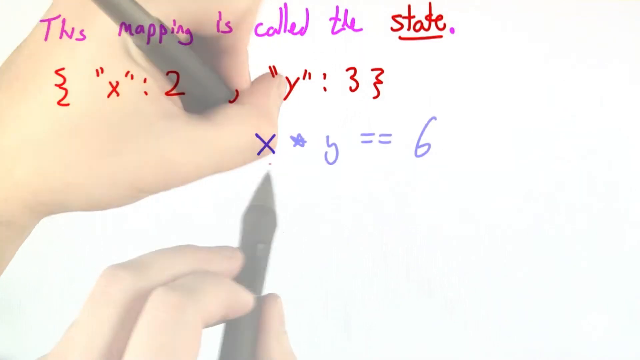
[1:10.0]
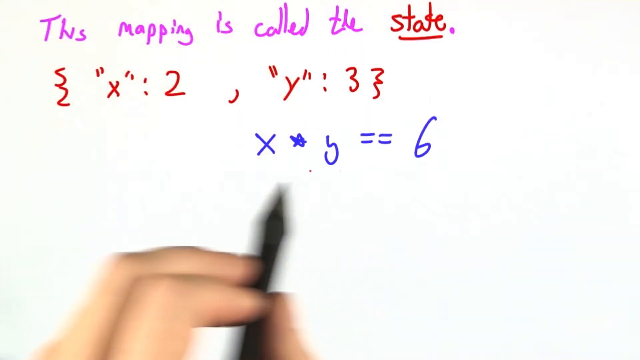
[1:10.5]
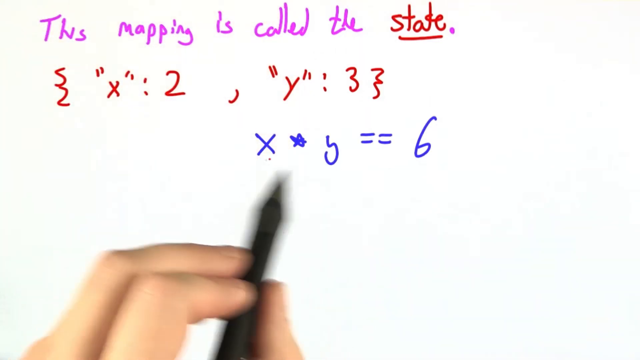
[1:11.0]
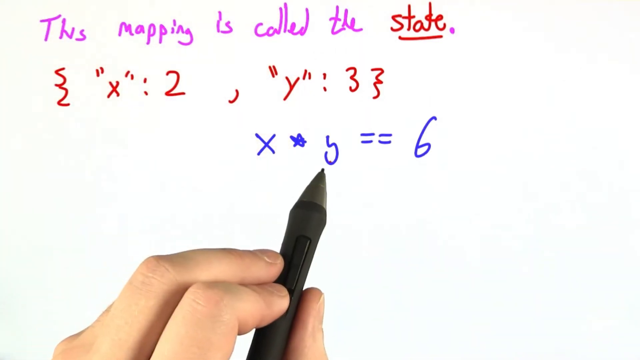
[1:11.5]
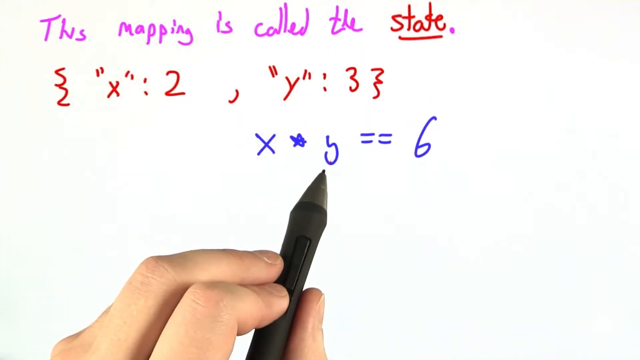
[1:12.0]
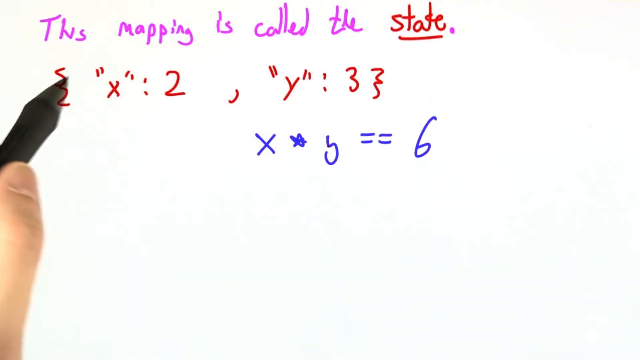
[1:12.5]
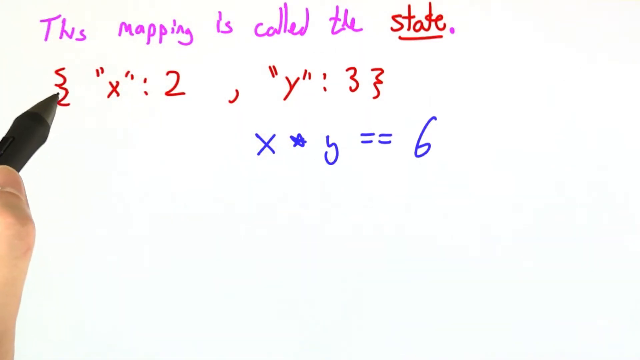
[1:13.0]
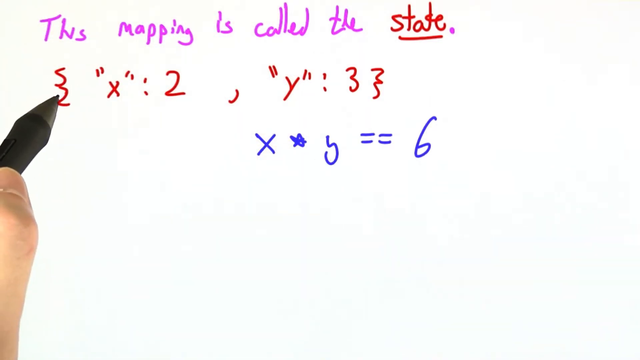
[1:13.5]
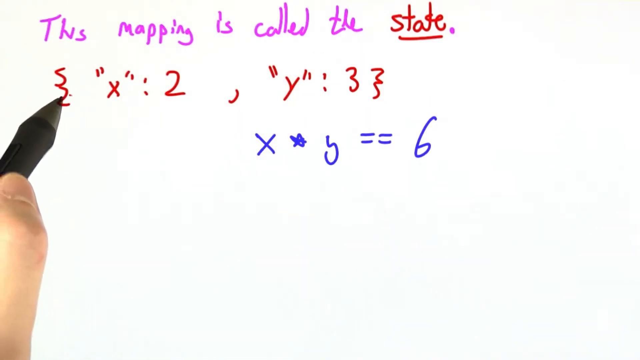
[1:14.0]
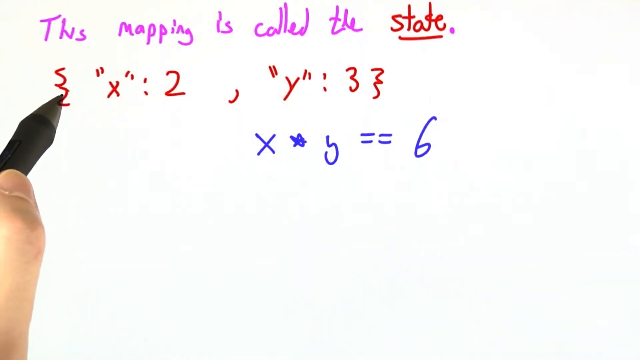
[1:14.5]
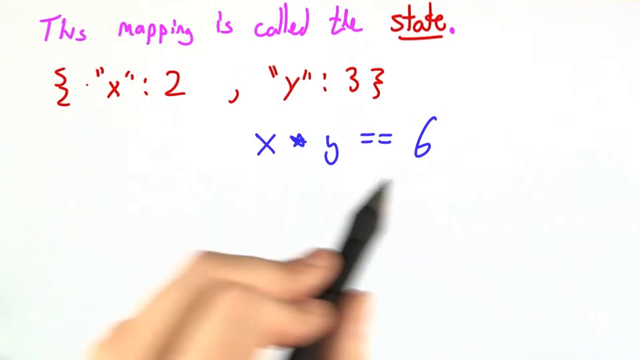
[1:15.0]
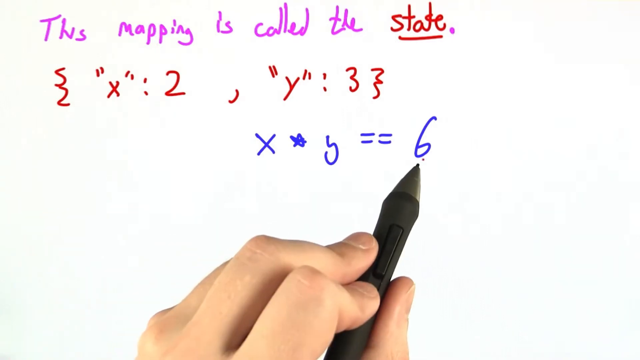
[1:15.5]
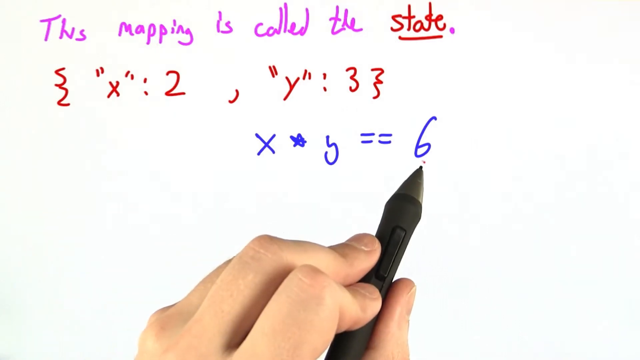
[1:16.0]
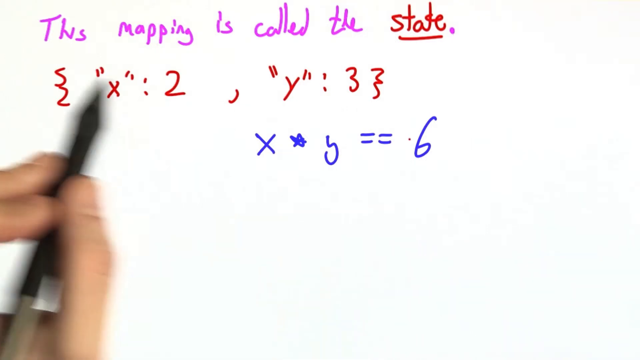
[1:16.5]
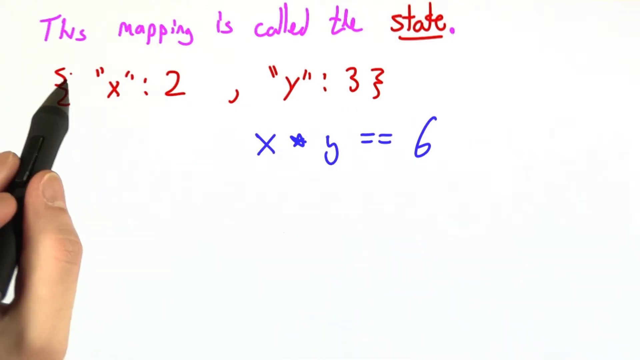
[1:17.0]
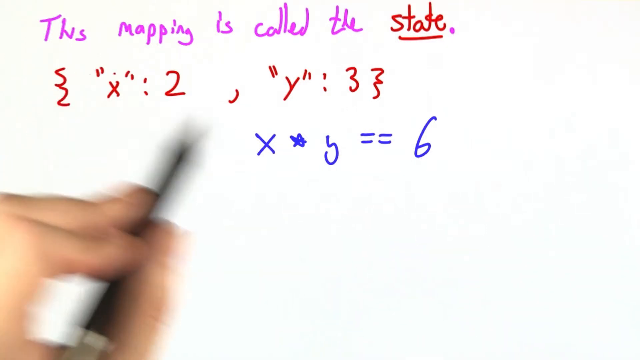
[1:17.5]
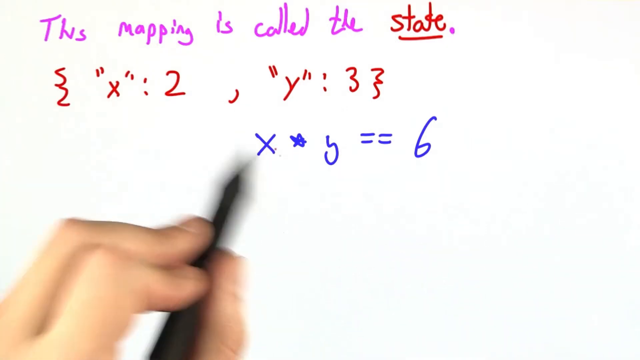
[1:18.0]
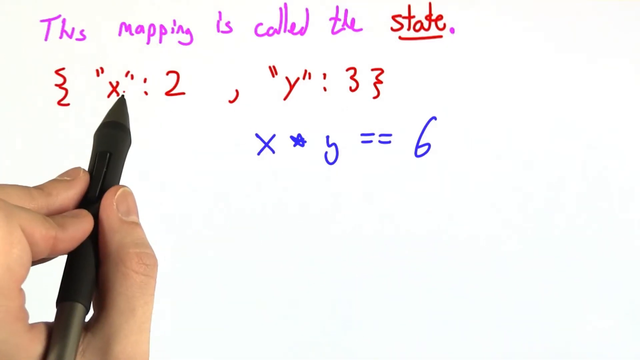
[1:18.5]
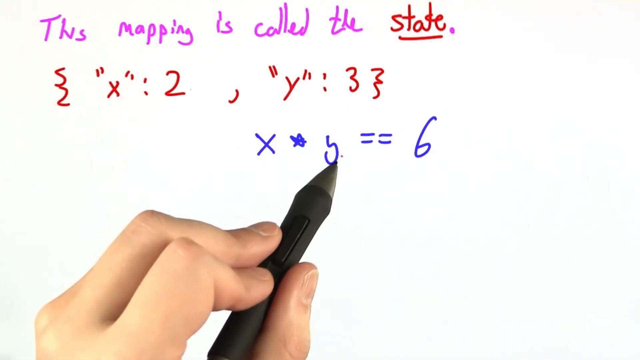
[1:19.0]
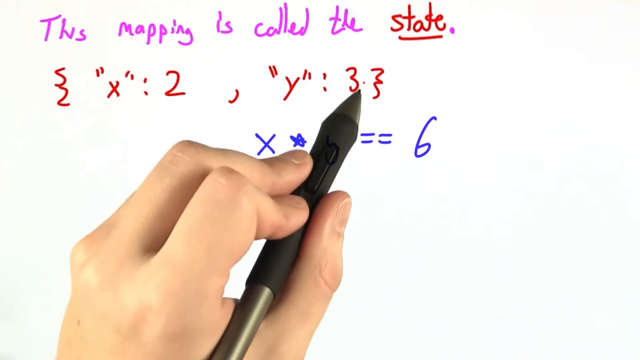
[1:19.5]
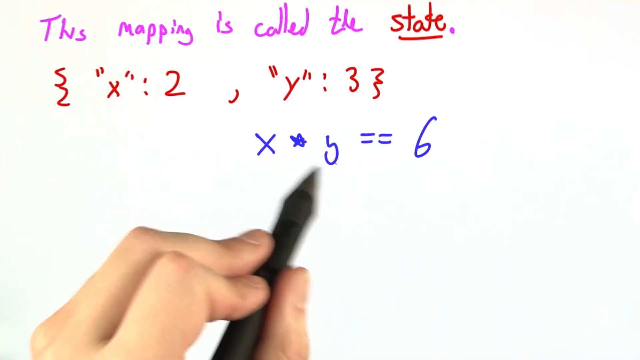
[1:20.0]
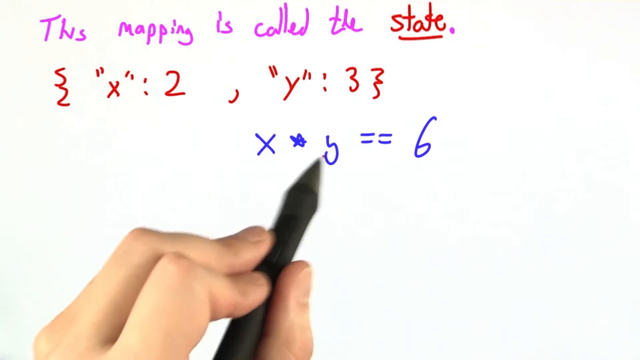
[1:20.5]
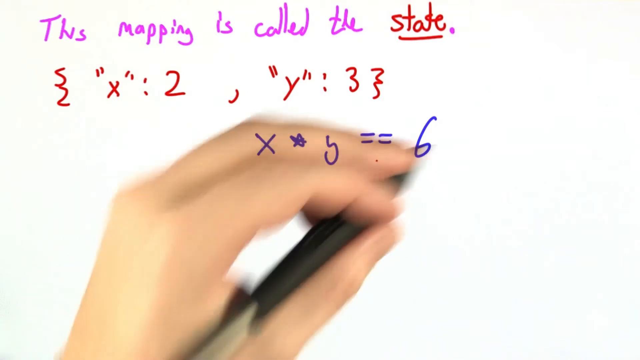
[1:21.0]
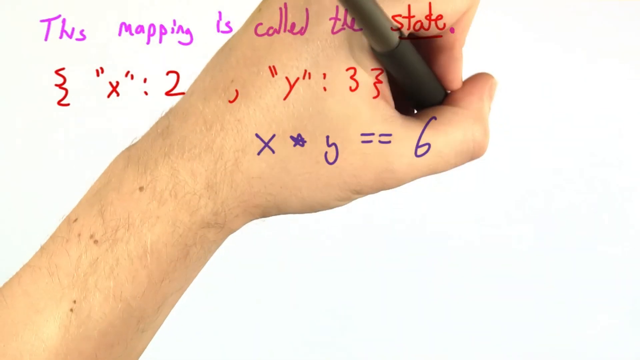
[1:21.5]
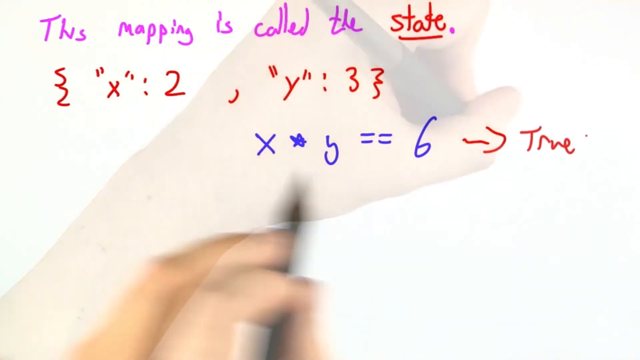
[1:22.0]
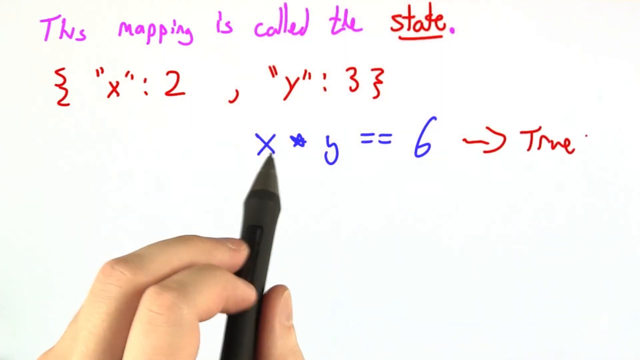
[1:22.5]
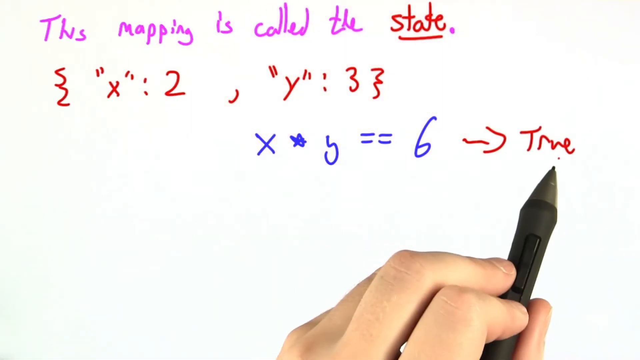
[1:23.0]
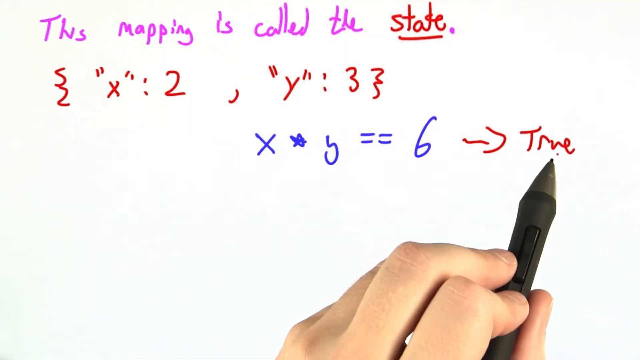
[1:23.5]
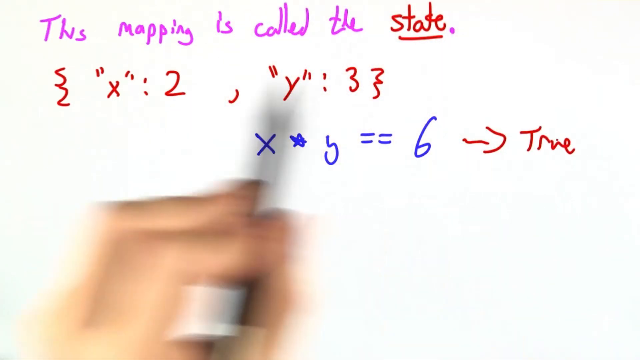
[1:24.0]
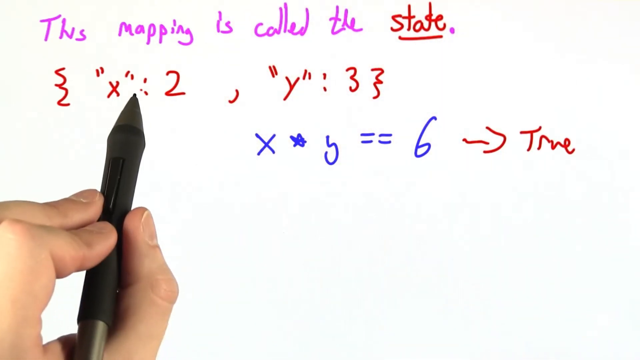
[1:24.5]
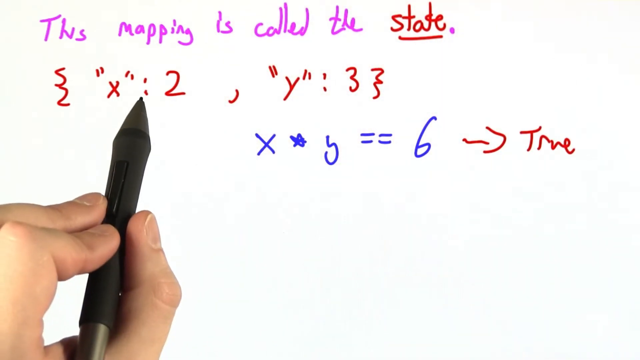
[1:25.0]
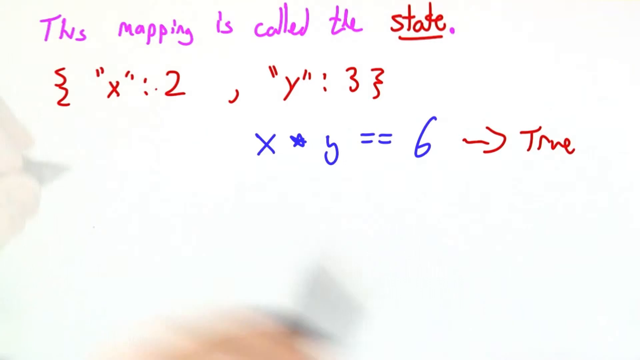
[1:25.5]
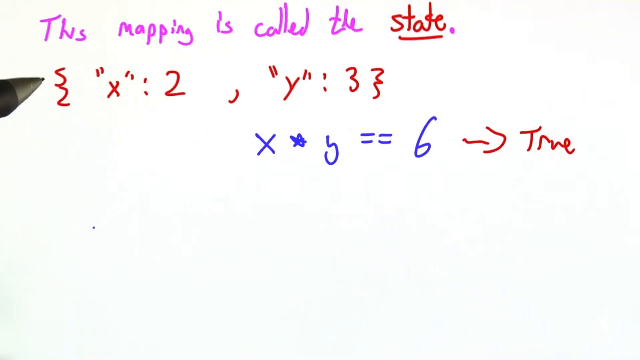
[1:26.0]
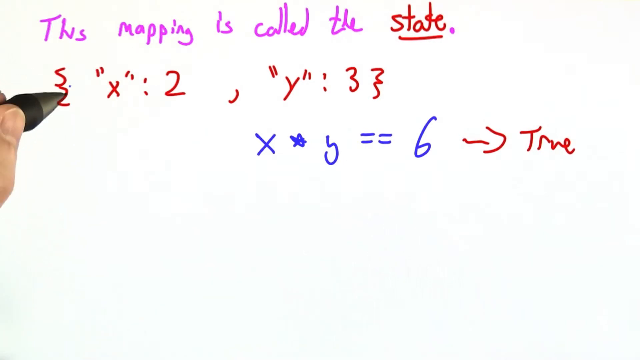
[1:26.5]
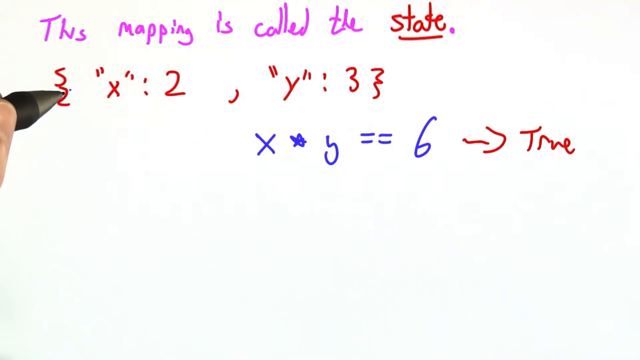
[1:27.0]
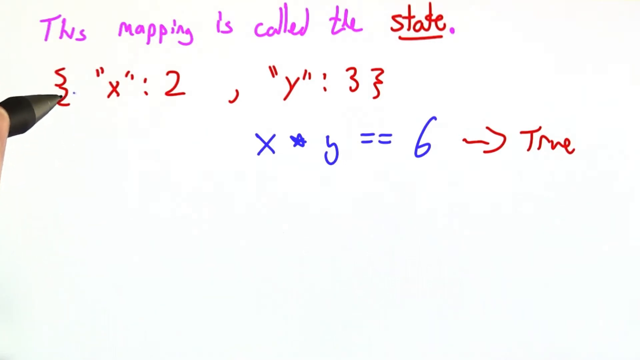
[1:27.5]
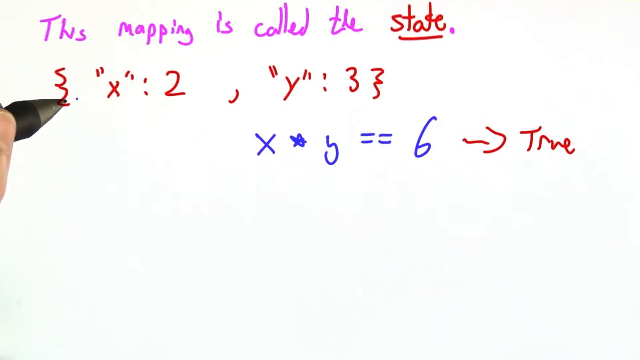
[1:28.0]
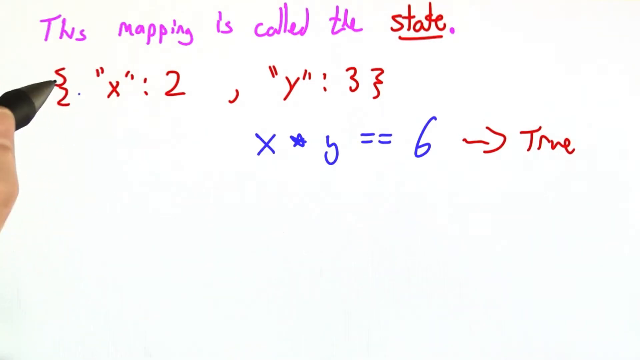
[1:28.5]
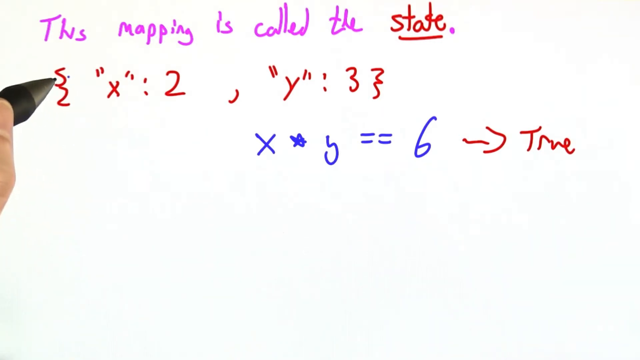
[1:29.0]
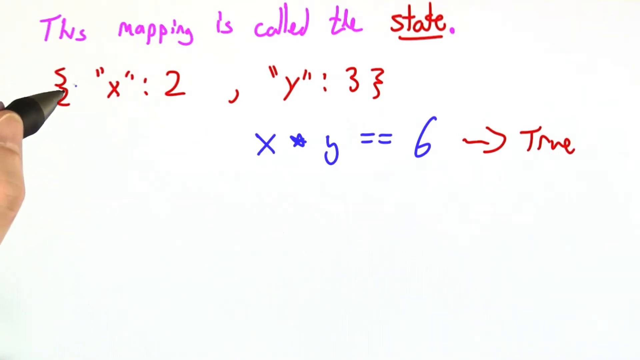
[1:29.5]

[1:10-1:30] The person moves the digital pen to show the relation between x equals 2, y equals 3 and x times y equals 6. They draw a red arrow to the right and write "real" next to it, then point to the different components of the equation.